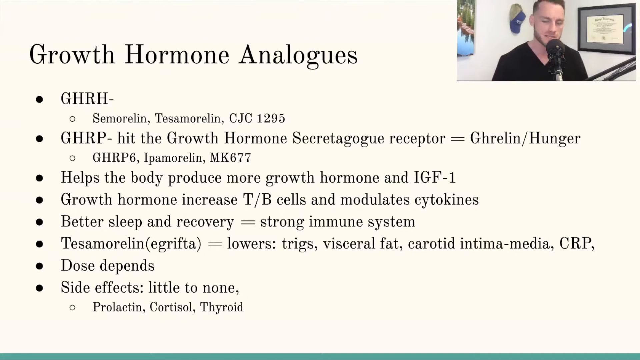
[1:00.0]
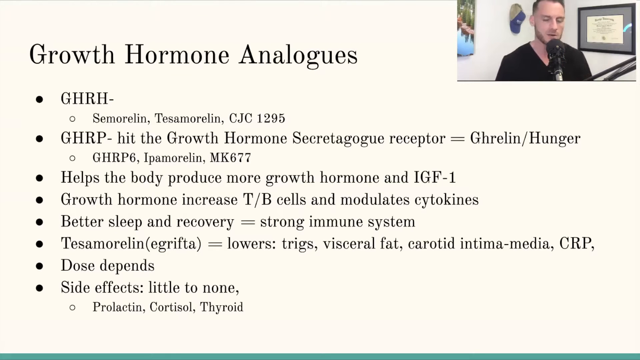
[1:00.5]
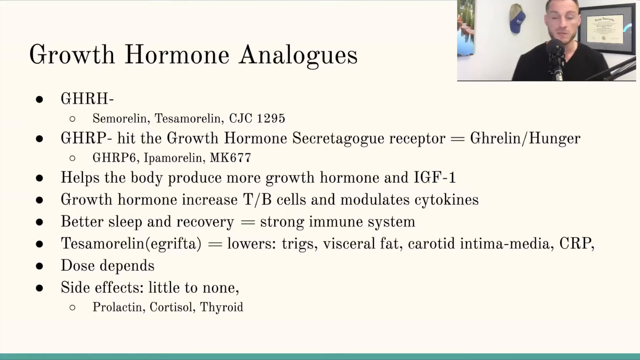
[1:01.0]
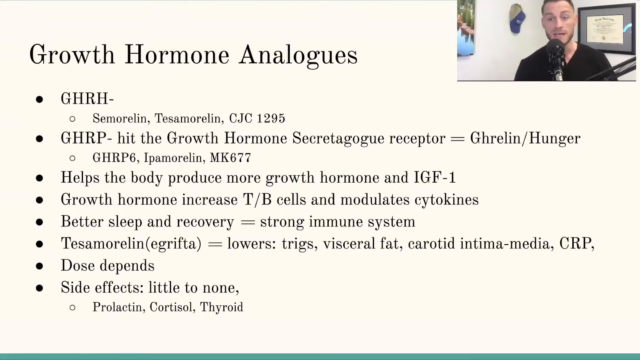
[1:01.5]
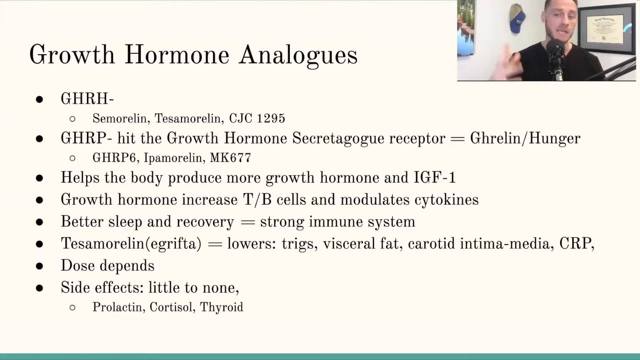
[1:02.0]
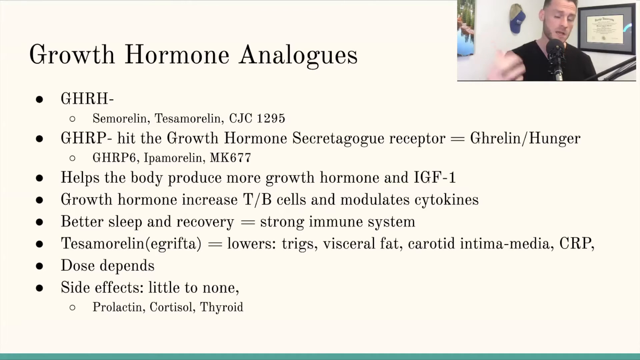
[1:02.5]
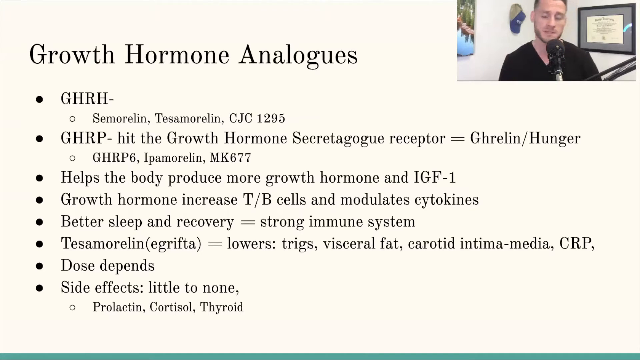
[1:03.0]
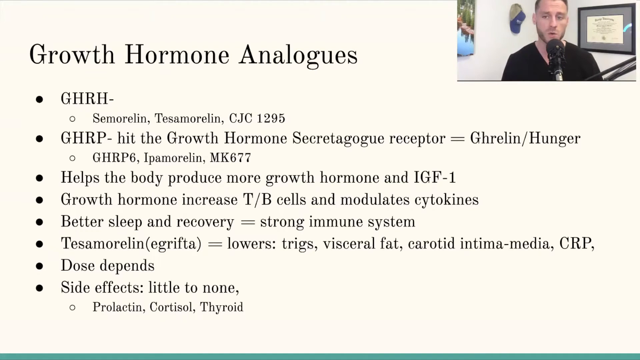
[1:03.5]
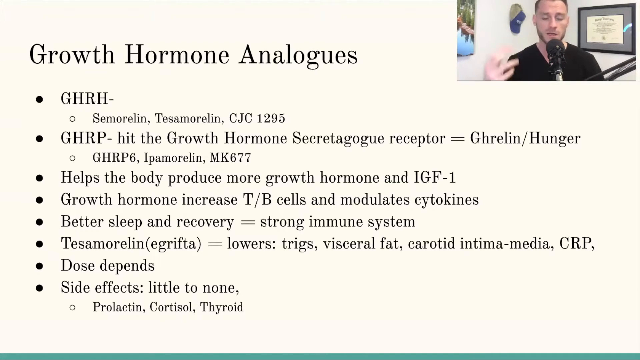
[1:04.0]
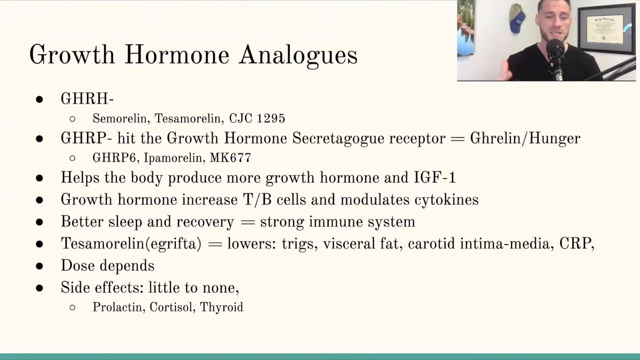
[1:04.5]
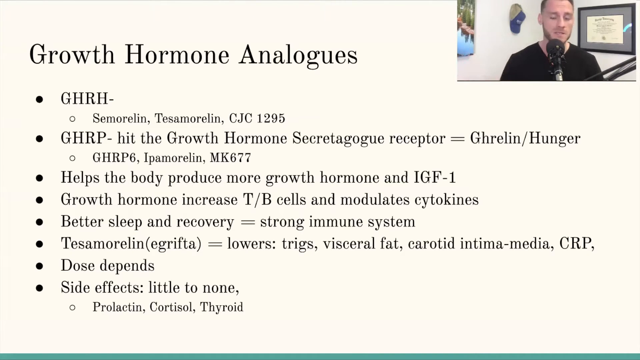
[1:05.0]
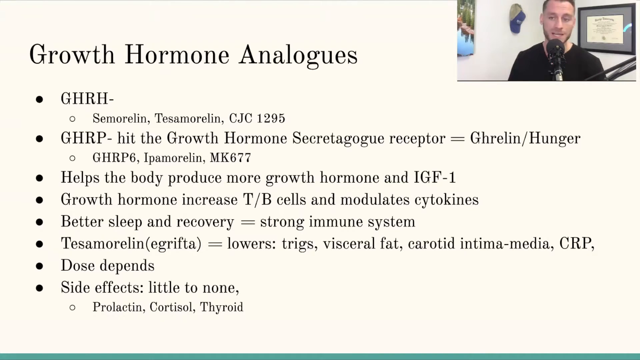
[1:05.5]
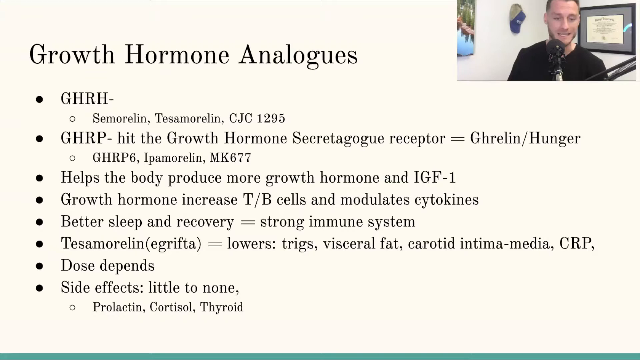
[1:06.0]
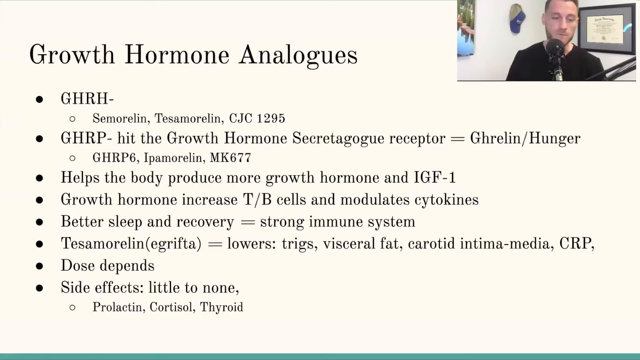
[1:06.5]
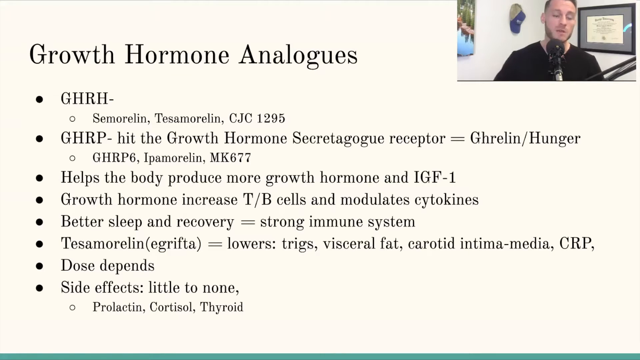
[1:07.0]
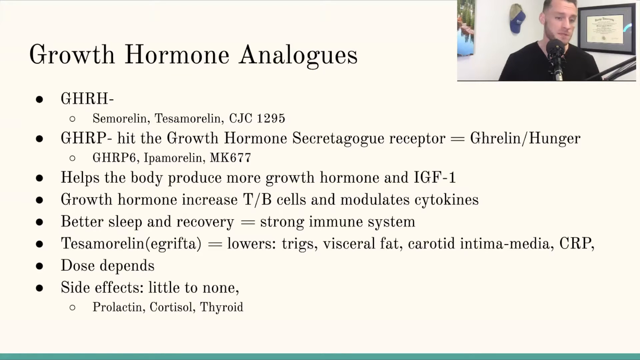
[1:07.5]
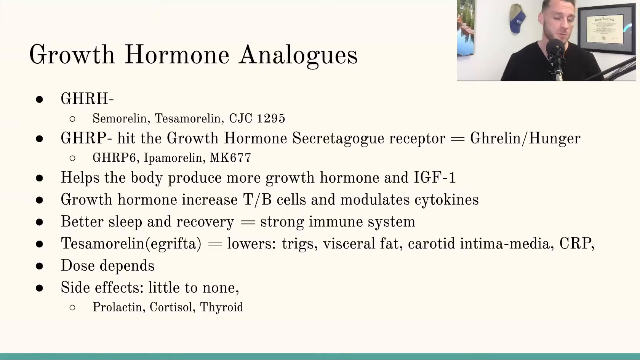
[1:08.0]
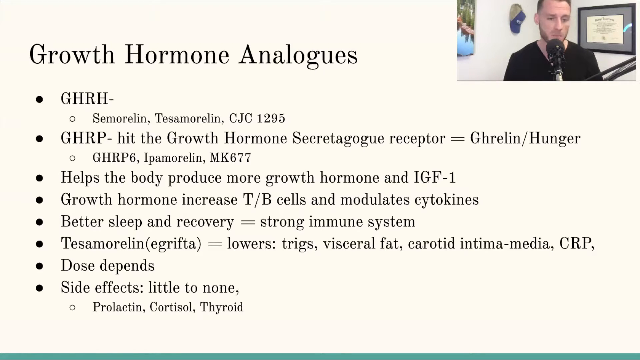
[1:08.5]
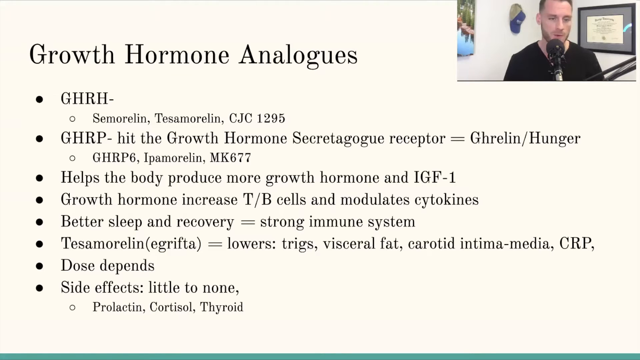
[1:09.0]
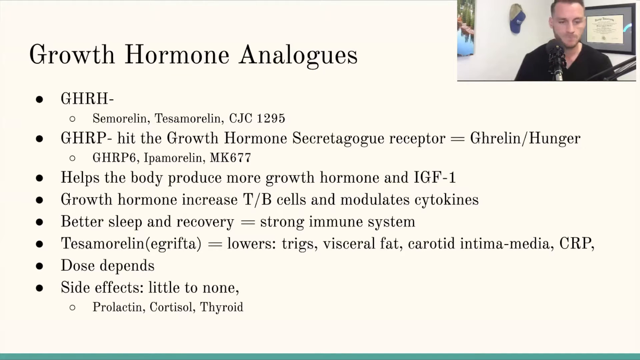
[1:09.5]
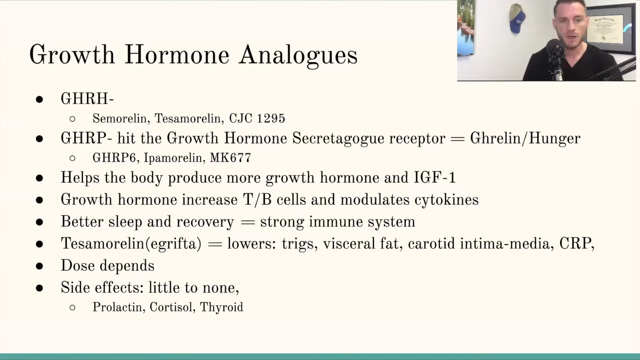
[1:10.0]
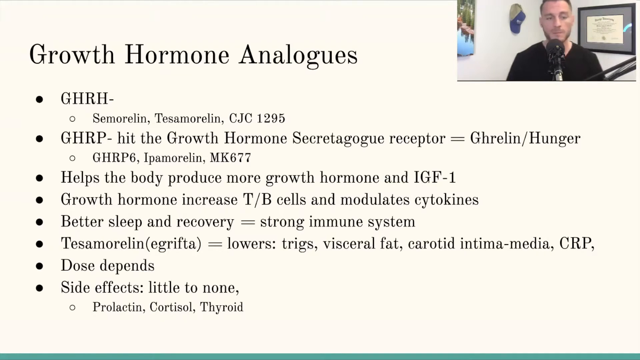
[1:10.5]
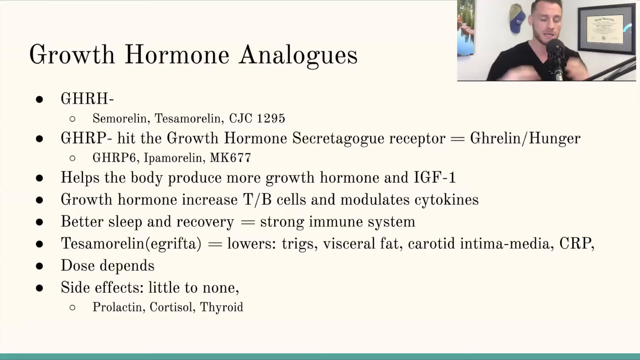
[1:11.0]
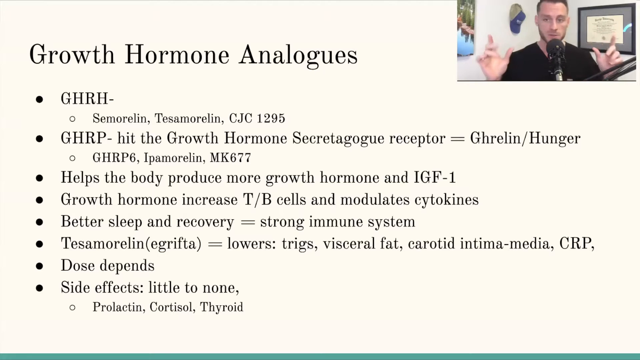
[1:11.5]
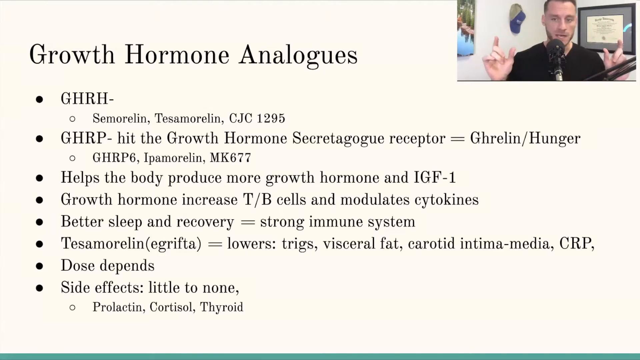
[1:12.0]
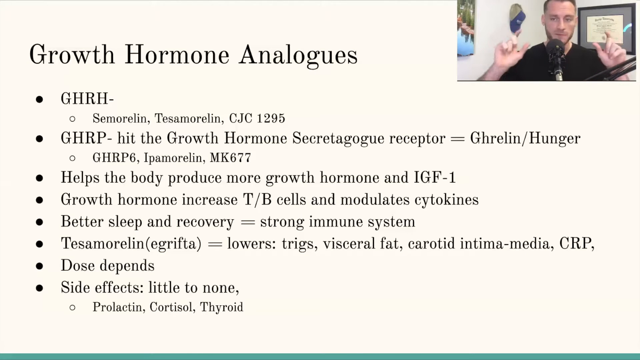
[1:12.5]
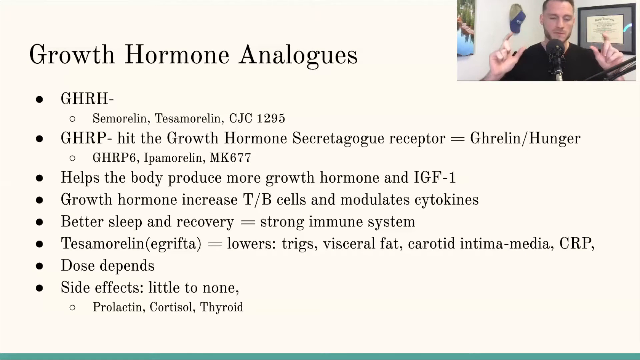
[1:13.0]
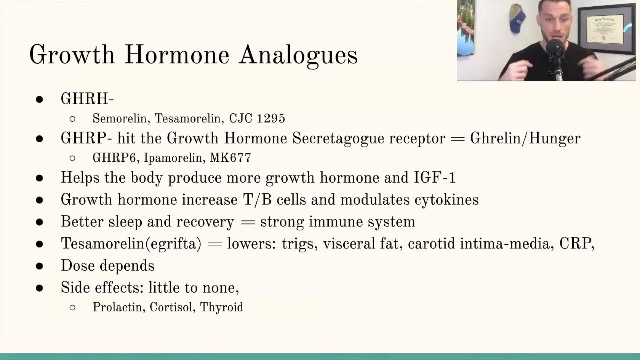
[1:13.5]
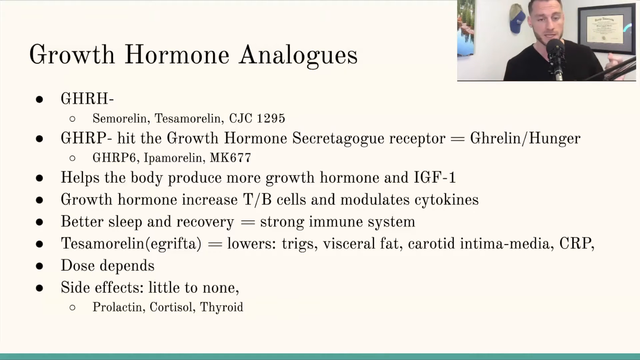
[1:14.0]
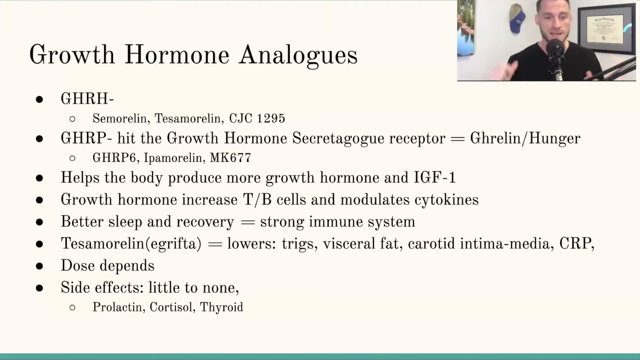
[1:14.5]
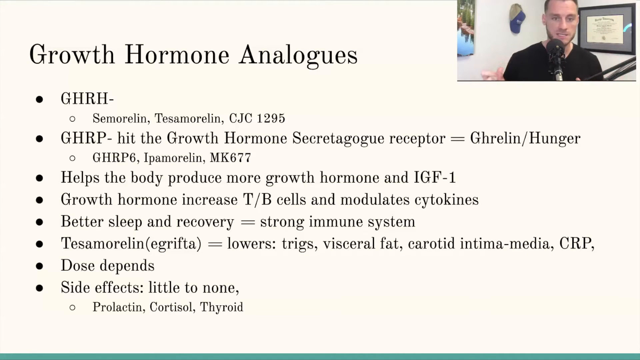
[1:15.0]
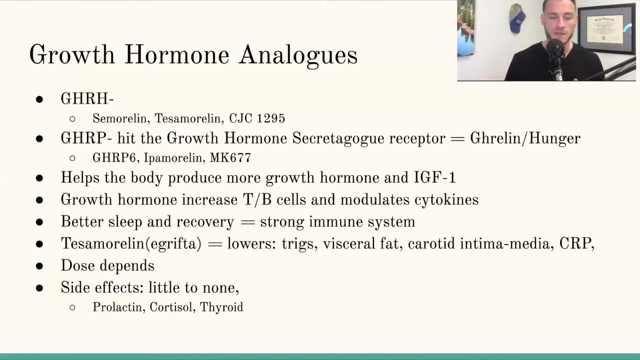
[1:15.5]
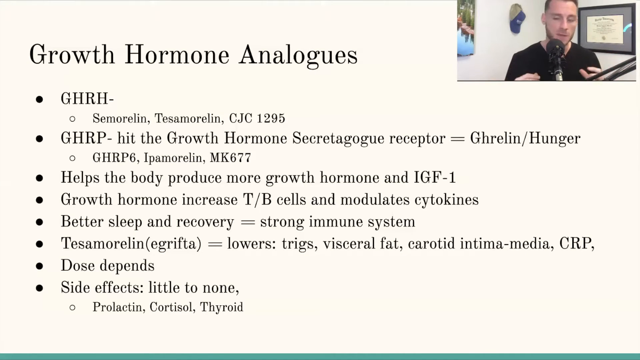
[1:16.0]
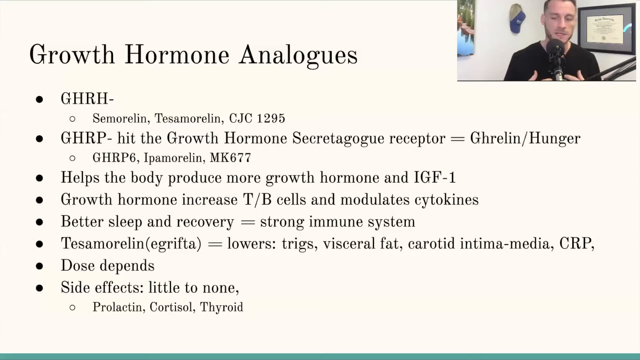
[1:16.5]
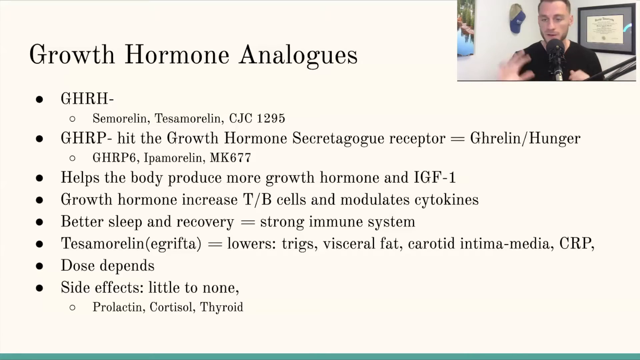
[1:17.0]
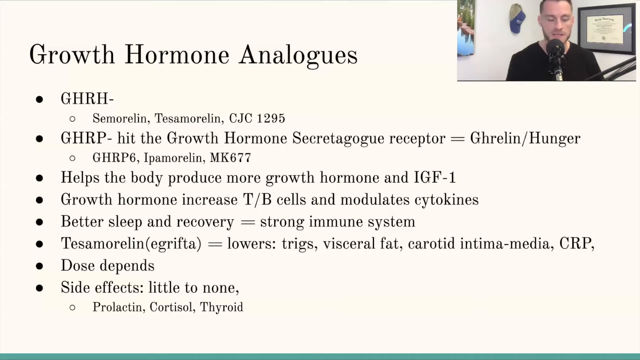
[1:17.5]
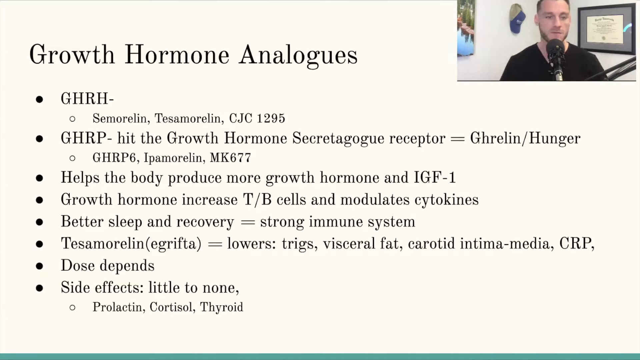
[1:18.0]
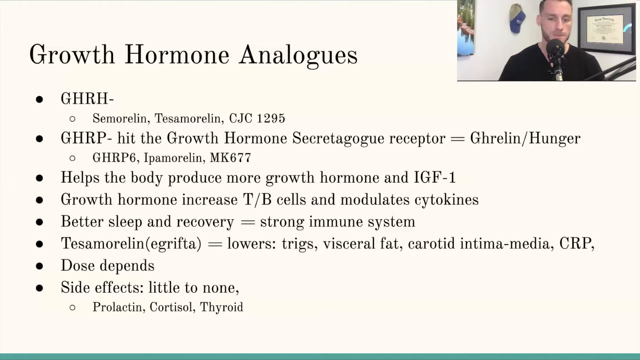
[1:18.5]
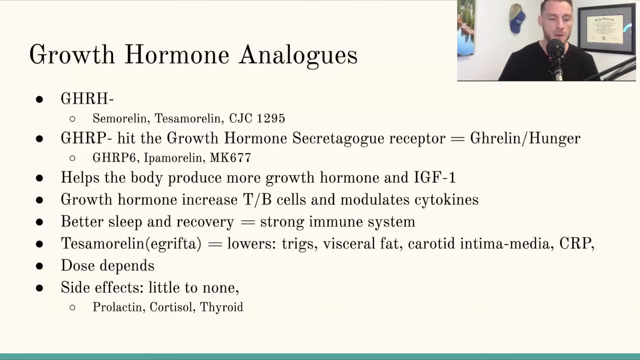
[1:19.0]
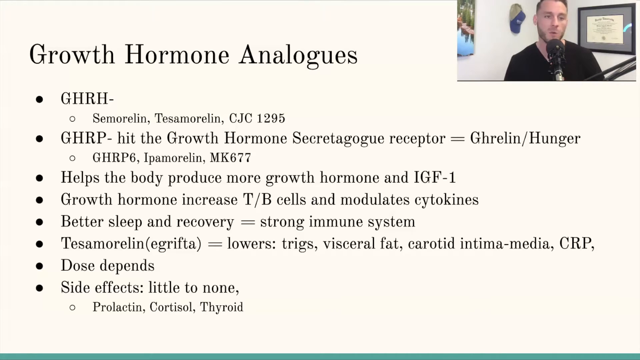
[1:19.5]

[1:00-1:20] The growth hormone analogues slide remains on screen while the man keeps talking in the top right. He uses his hands a lot as he talks, and although he is not smiling, he seems to be talking quite quickly, his hands making lots of movements. On the wall behind him there is what looks like some kind of certificate, too small to read. He looks very confident.